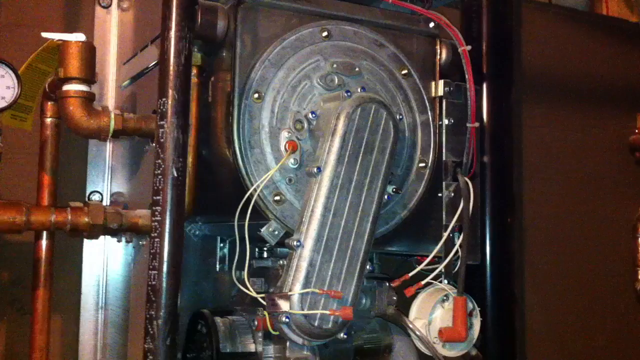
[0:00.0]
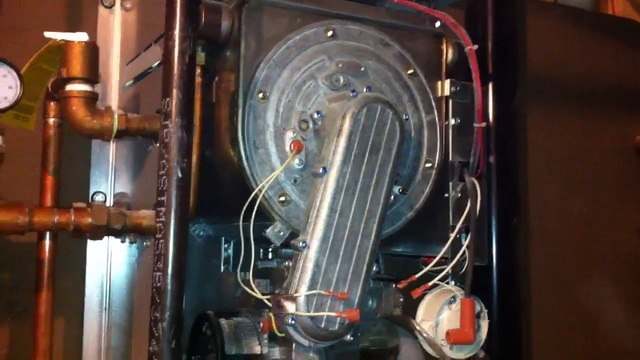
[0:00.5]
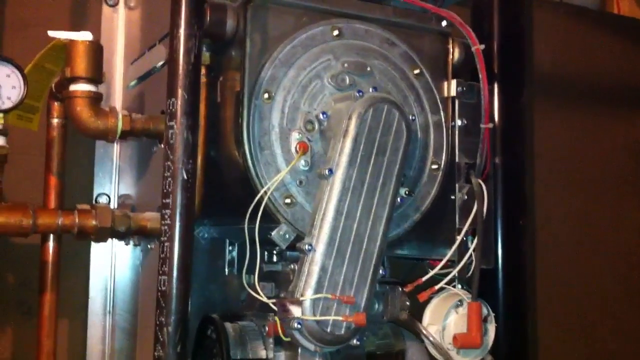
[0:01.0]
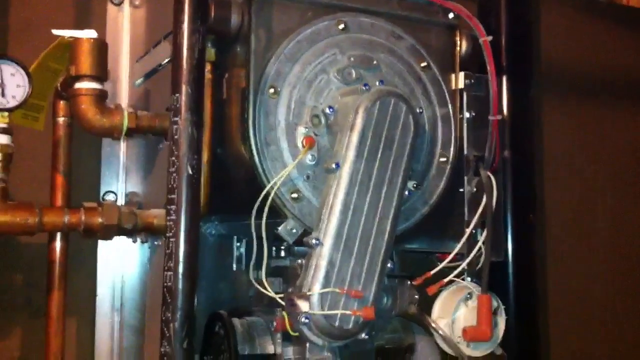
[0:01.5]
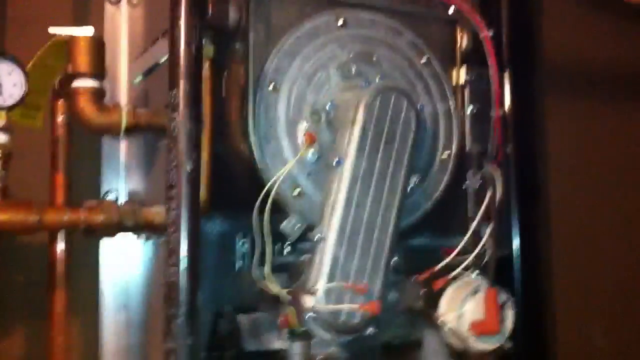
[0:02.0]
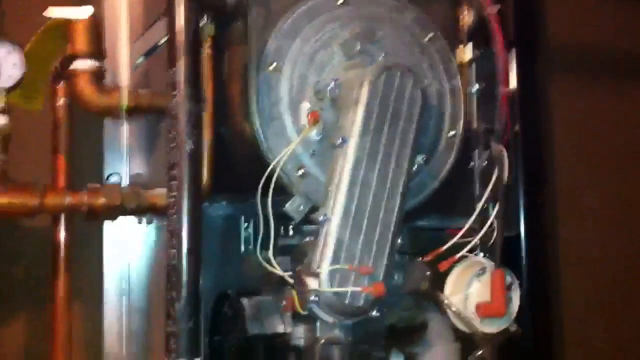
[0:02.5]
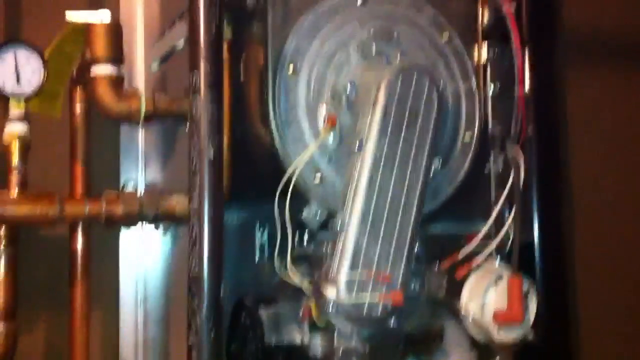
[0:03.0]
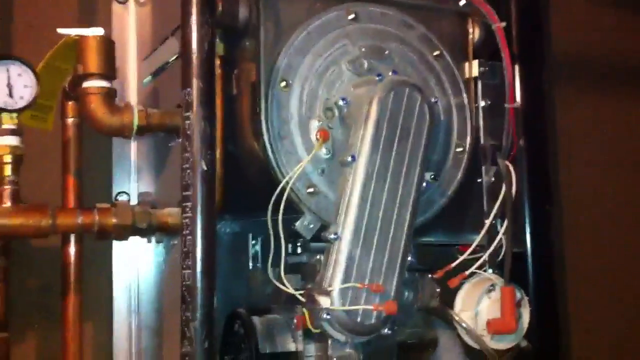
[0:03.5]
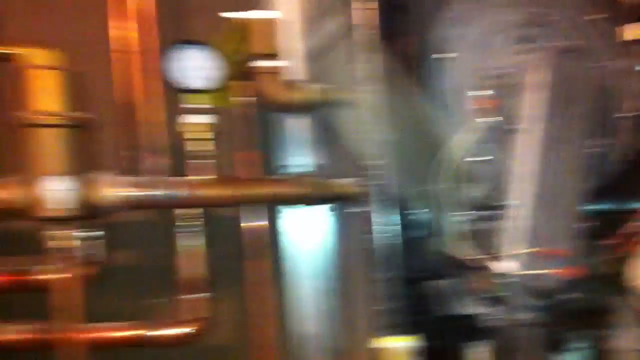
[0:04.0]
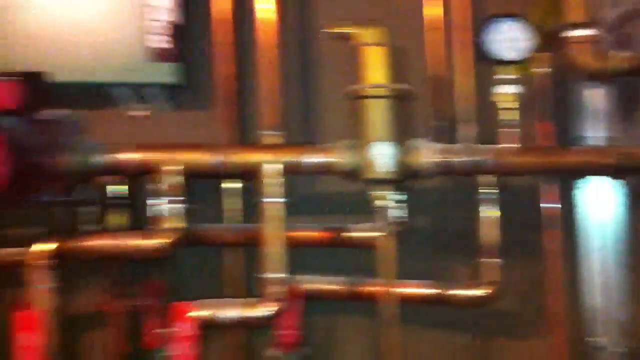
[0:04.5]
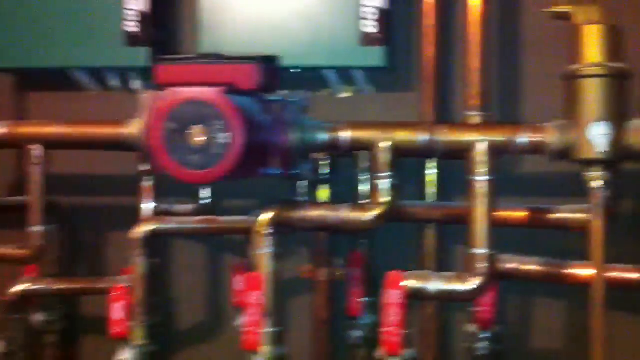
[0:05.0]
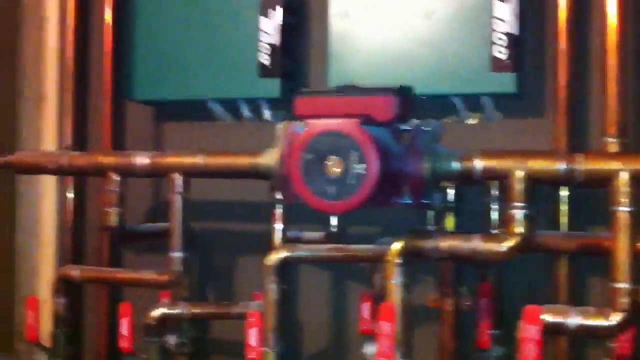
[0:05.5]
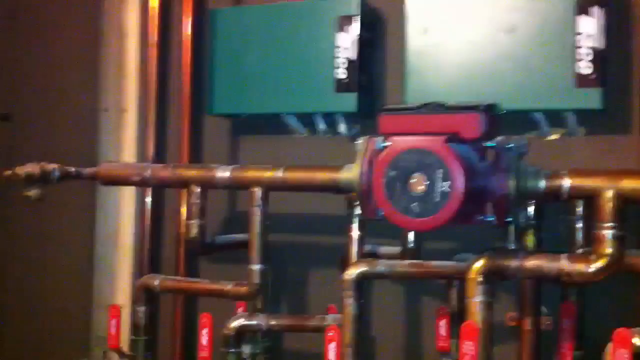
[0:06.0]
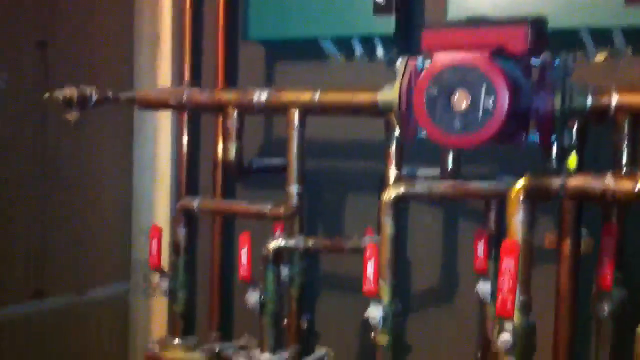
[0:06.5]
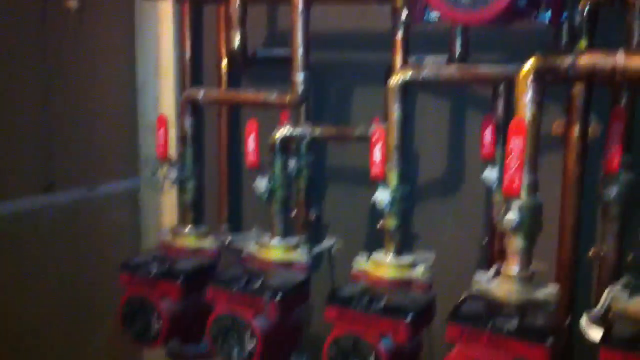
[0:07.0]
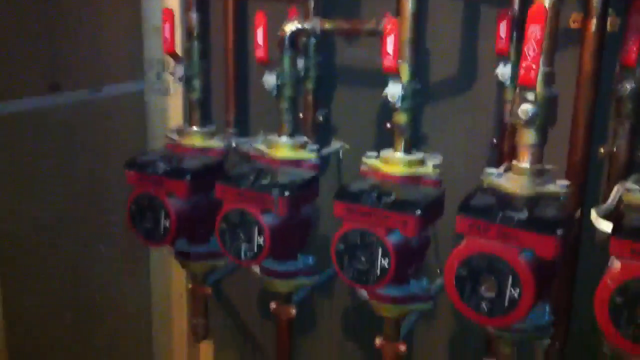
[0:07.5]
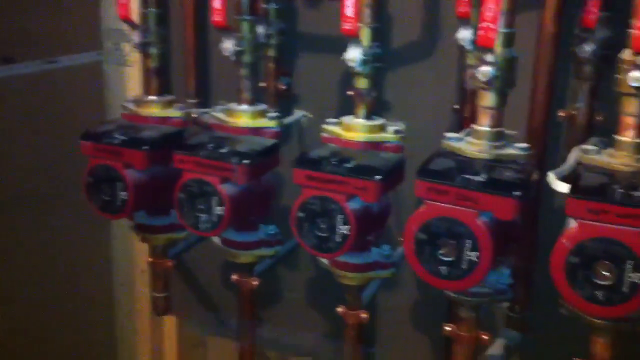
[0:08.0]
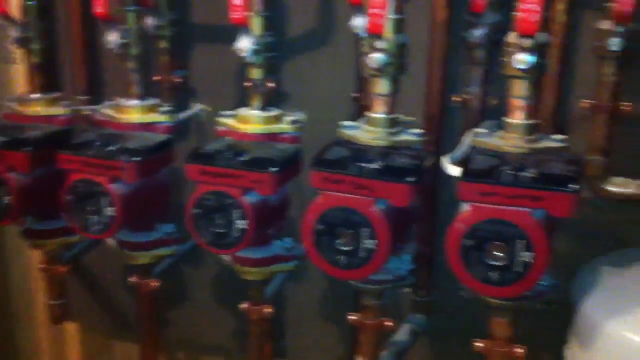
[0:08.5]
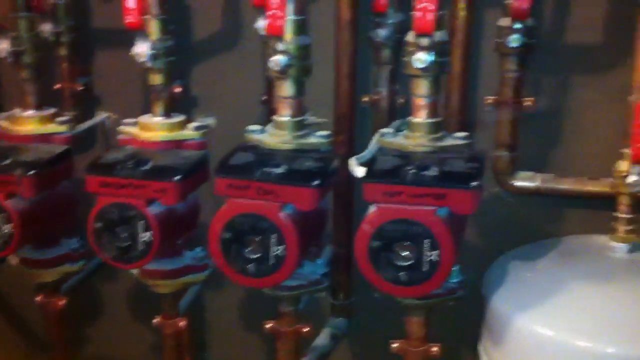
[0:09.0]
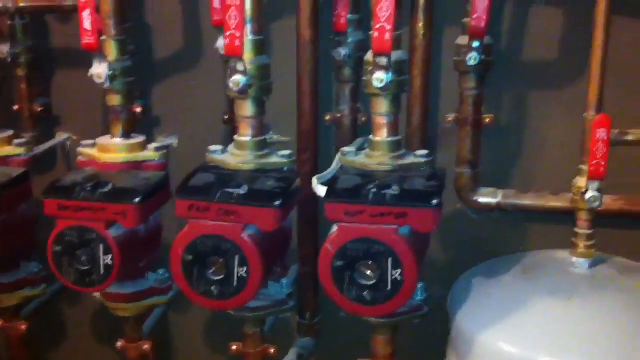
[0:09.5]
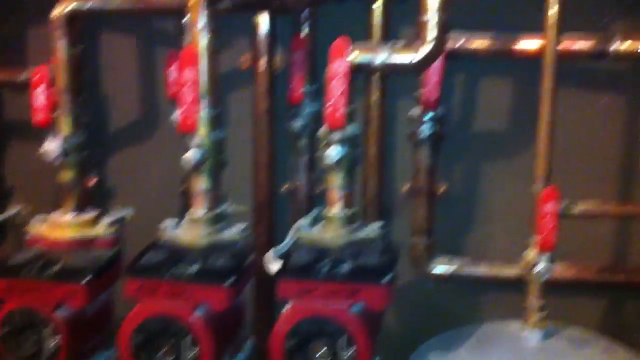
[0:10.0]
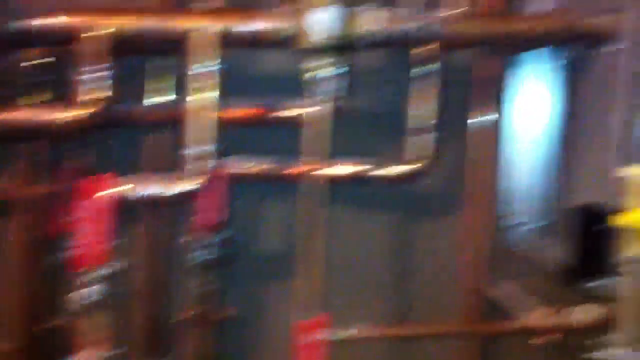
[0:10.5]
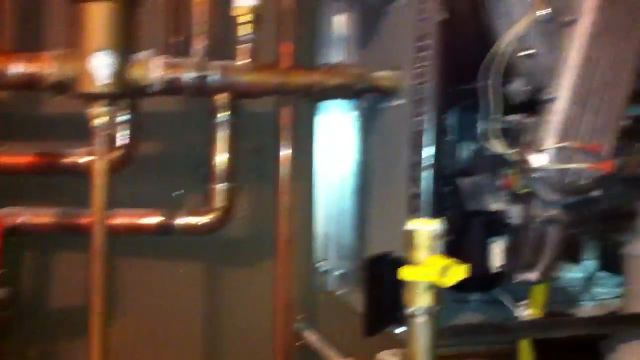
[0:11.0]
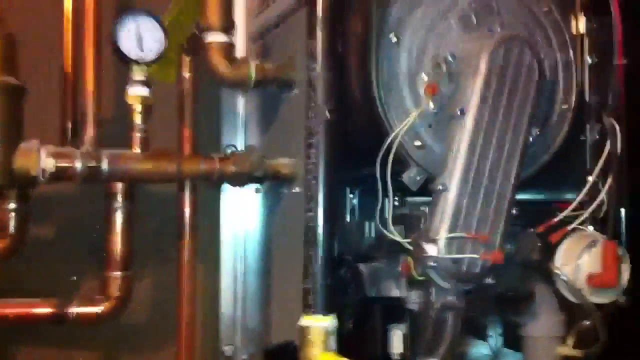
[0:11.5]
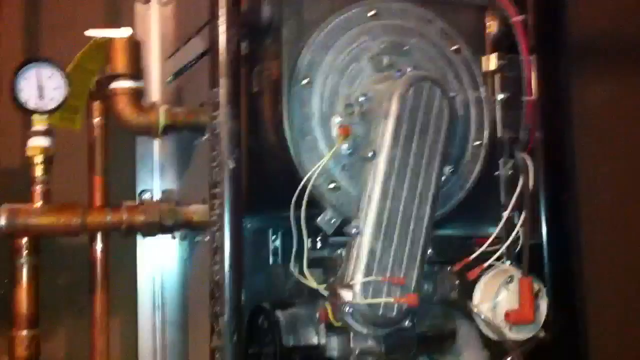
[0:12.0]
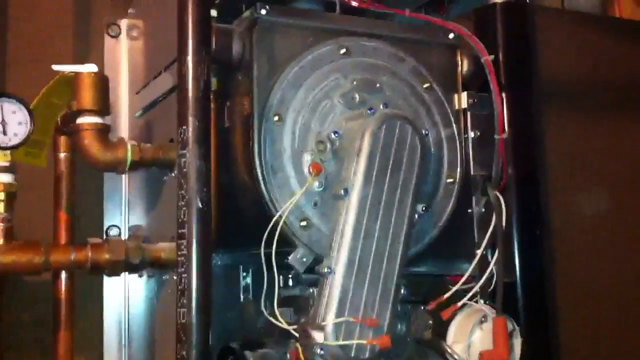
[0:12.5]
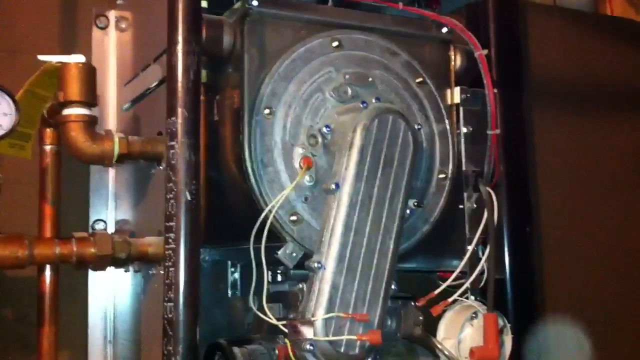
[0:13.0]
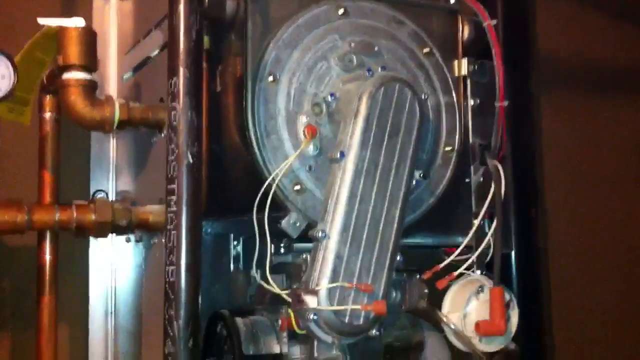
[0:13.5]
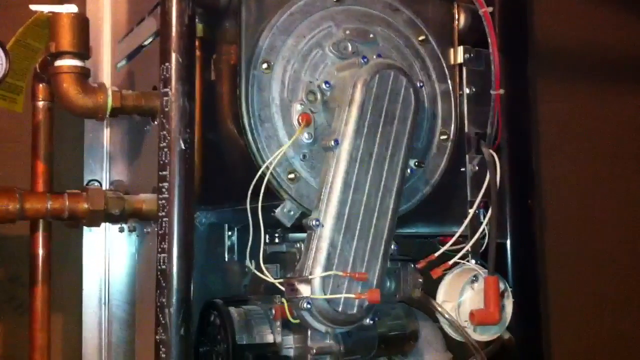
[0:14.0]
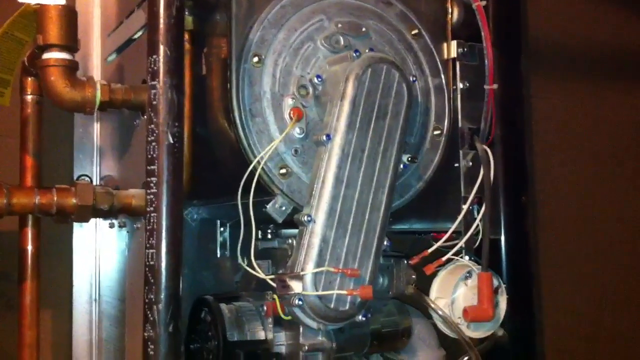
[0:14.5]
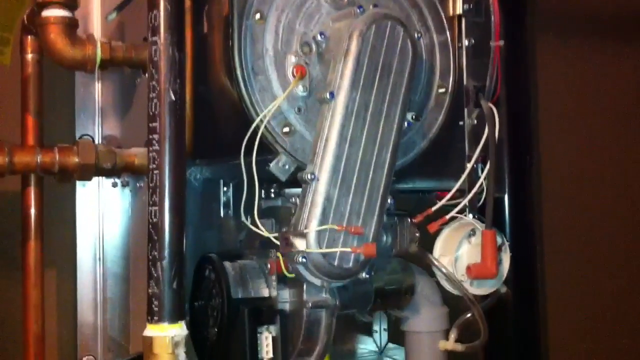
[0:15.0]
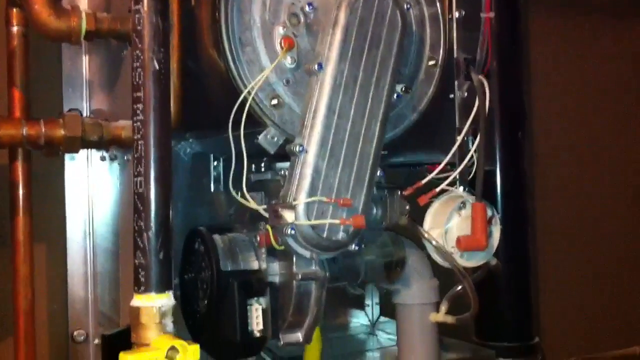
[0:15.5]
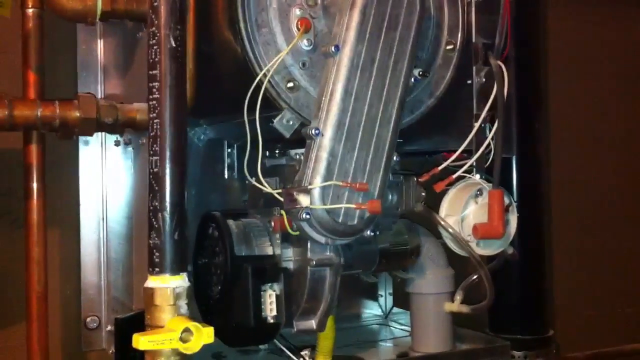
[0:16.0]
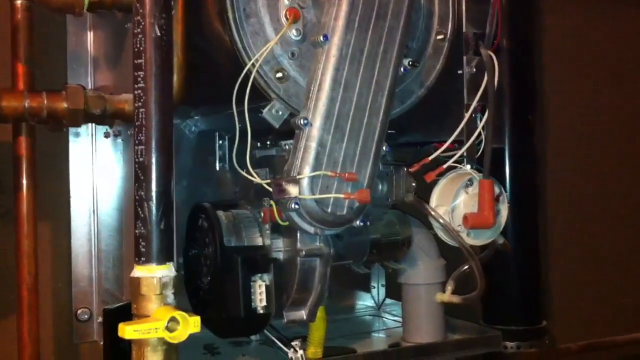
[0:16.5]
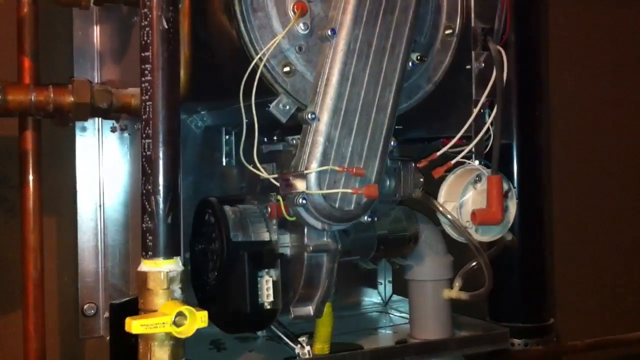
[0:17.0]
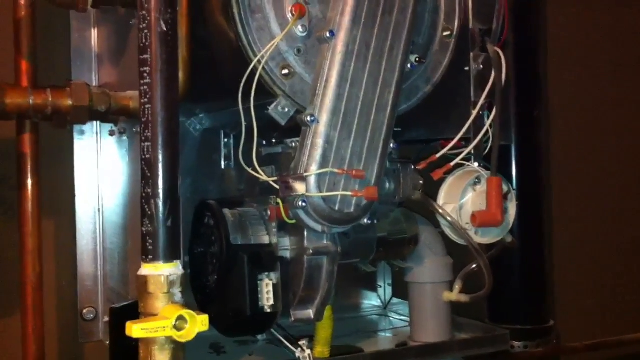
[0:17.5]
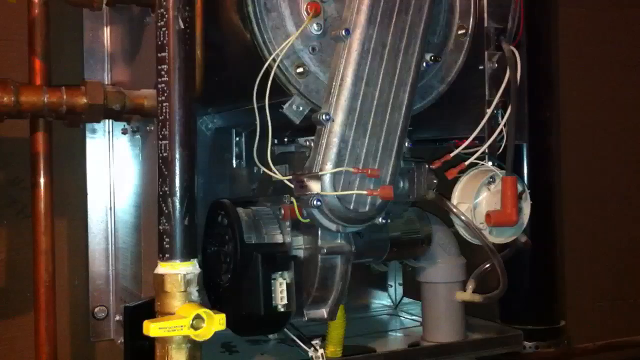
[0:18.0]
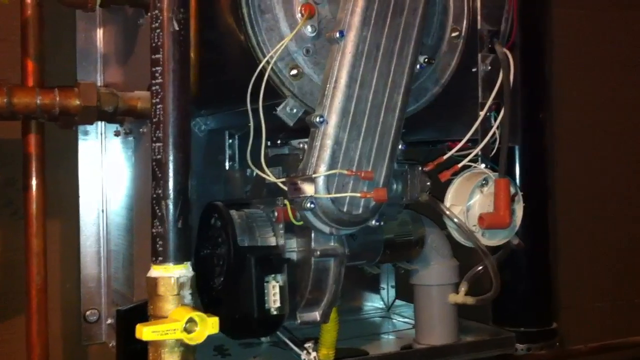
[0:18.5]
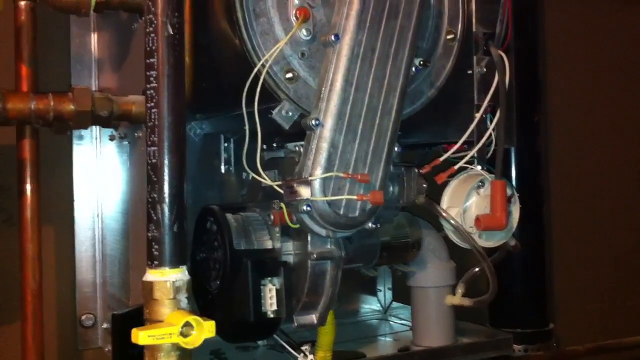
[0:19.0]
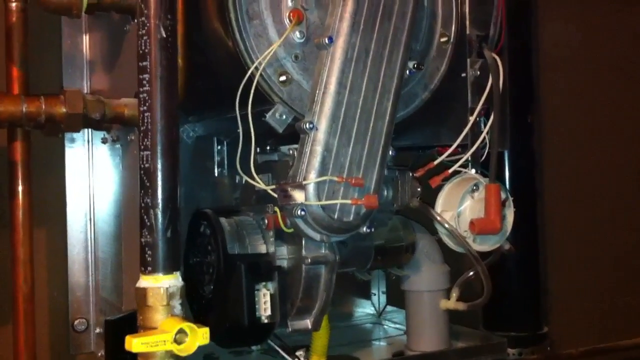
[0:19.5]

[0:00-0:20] The setting appears to be some type of factory place, possibly a refinery or an engine room for a boat, ship or submarine. There are a lot of machines, pipes, little pressure gadgets and pressure meters, along with wires and tubes, with a lot of silver and metal. No people are visible, and the scene is inside something like a building or a ship.